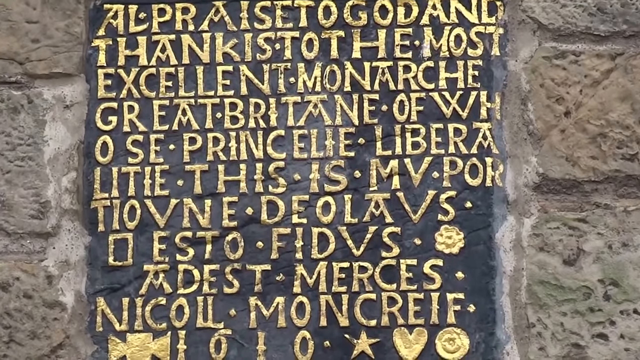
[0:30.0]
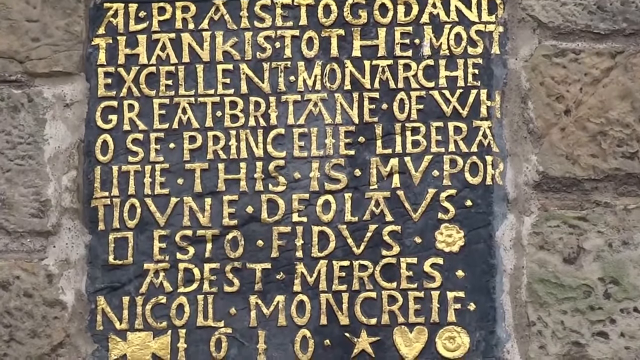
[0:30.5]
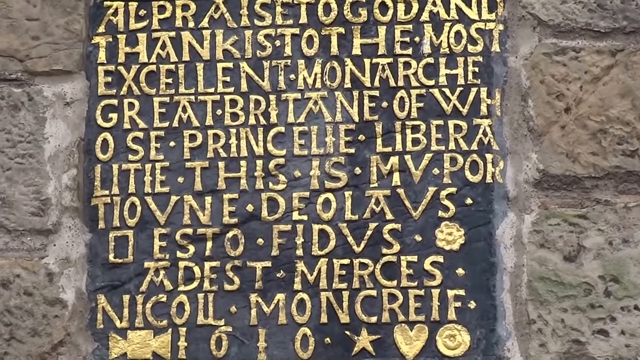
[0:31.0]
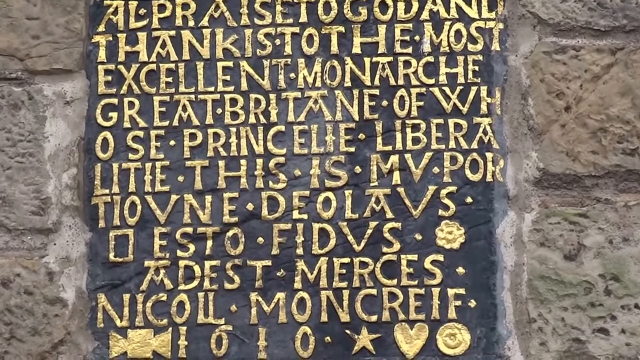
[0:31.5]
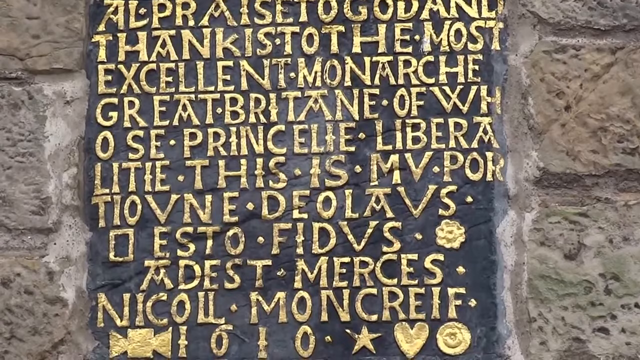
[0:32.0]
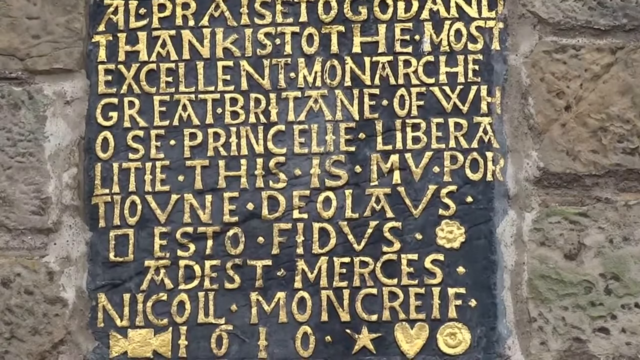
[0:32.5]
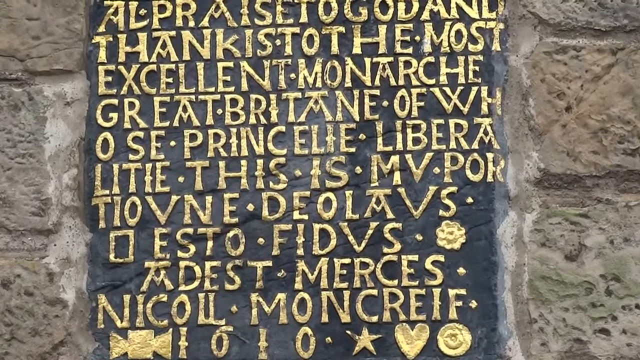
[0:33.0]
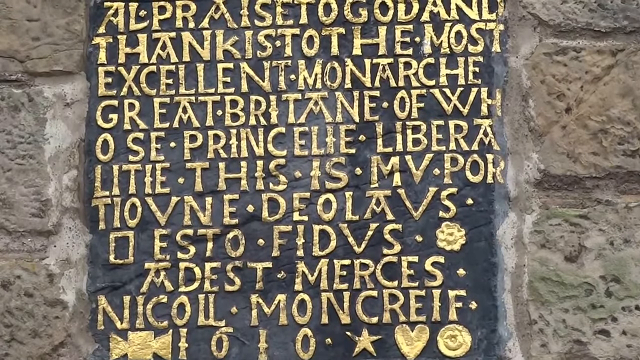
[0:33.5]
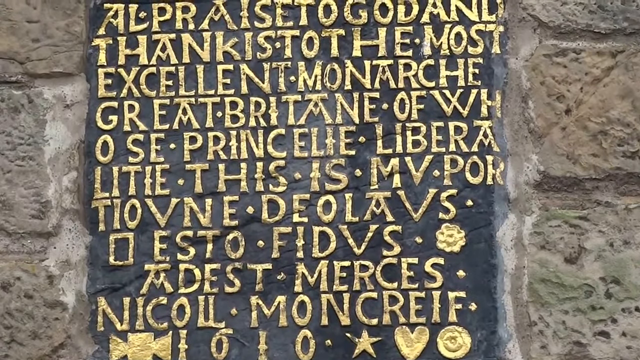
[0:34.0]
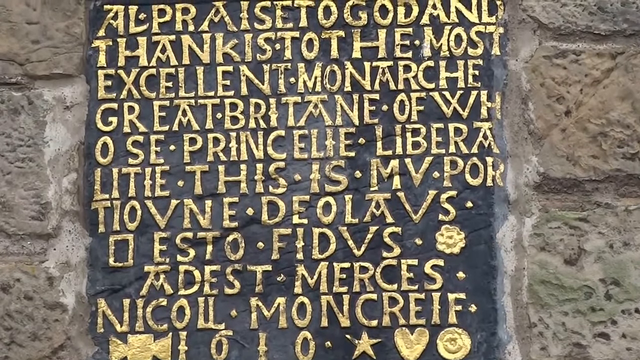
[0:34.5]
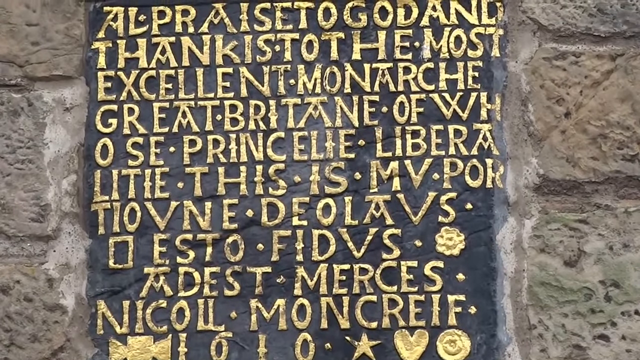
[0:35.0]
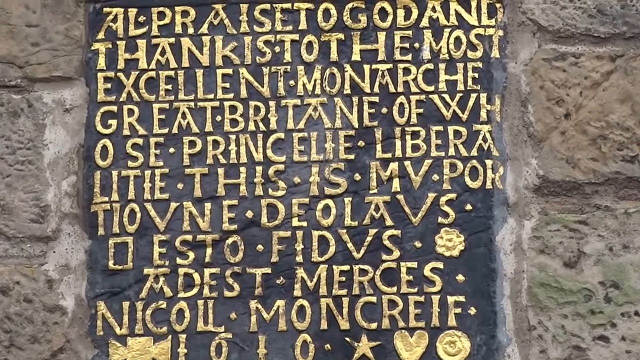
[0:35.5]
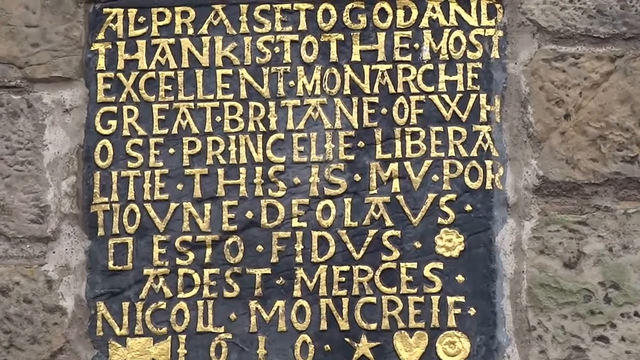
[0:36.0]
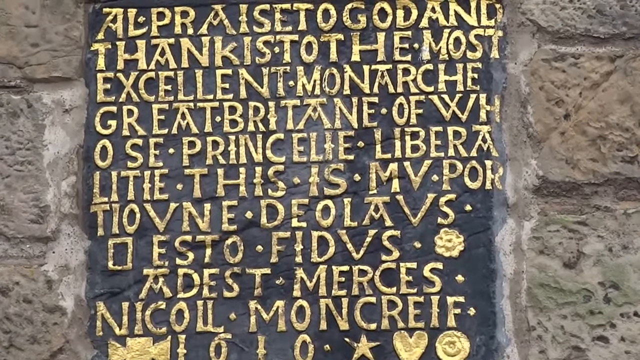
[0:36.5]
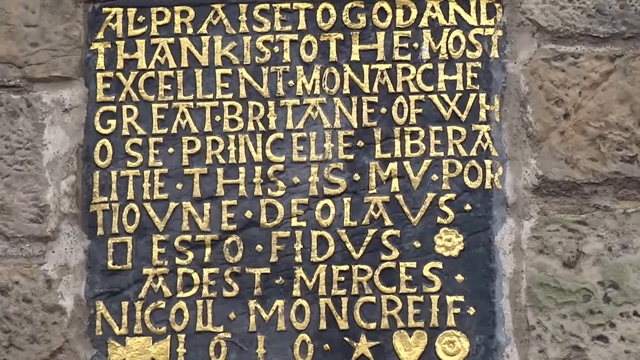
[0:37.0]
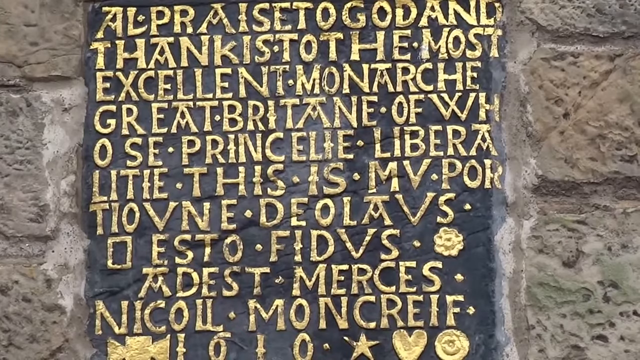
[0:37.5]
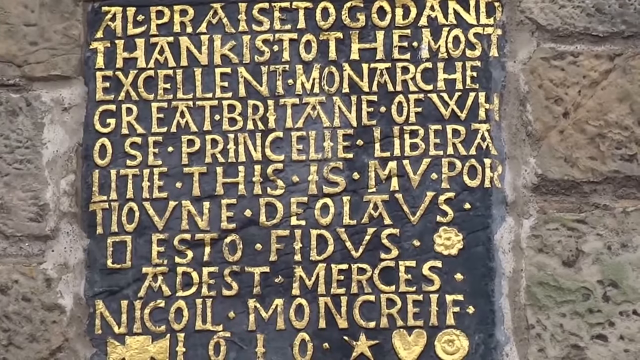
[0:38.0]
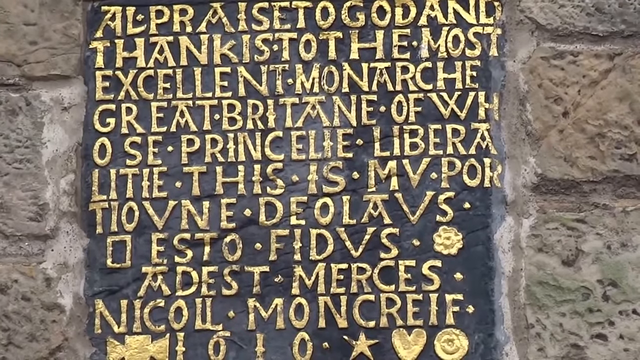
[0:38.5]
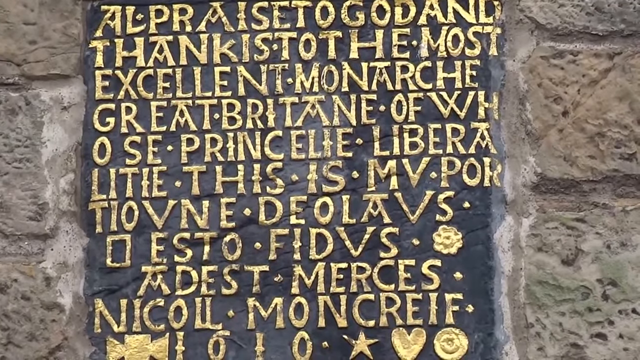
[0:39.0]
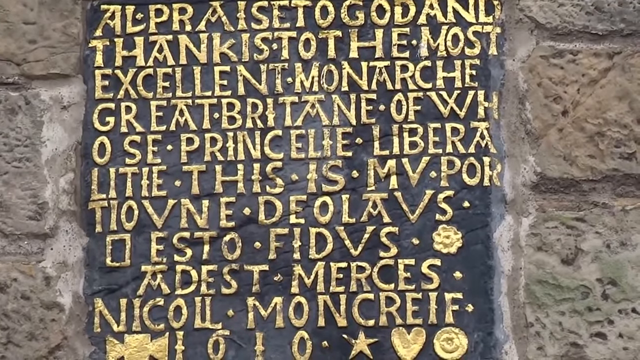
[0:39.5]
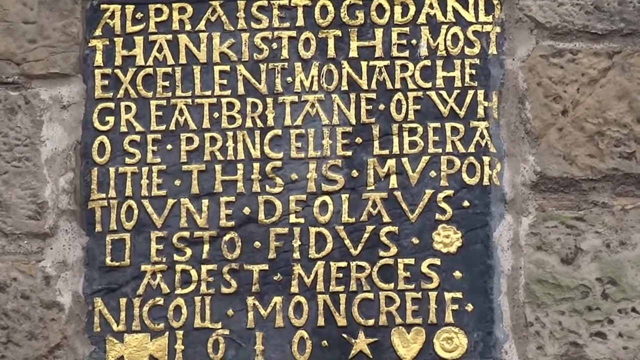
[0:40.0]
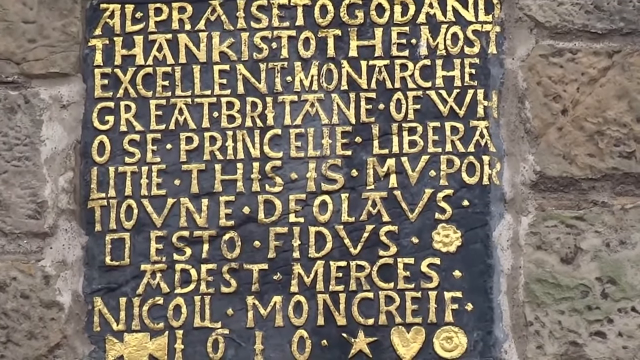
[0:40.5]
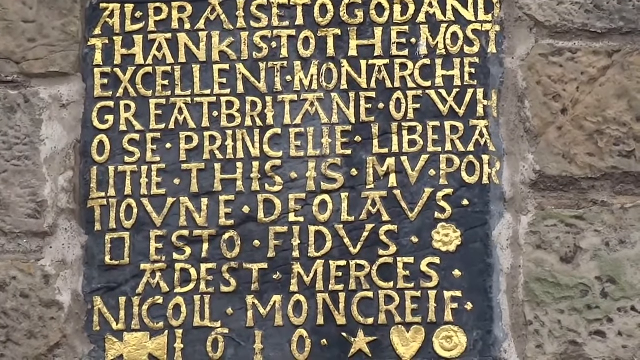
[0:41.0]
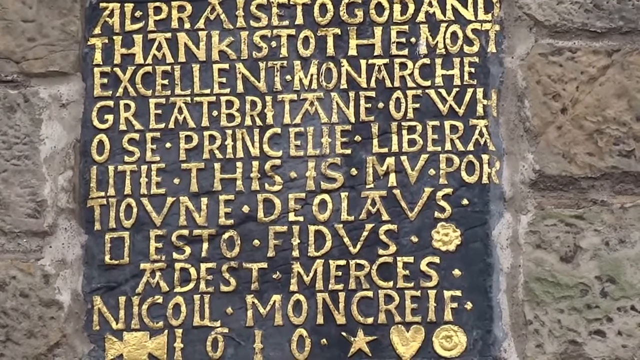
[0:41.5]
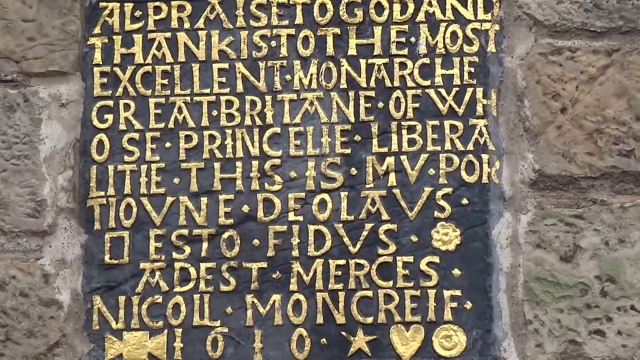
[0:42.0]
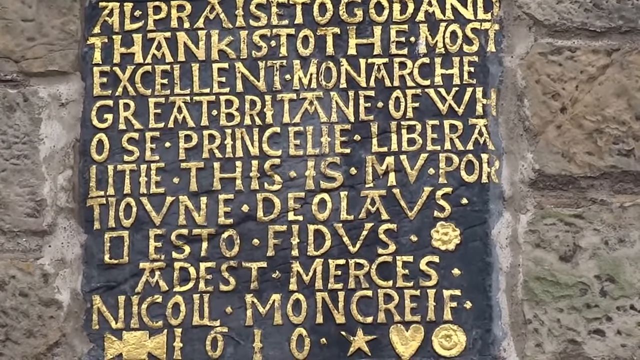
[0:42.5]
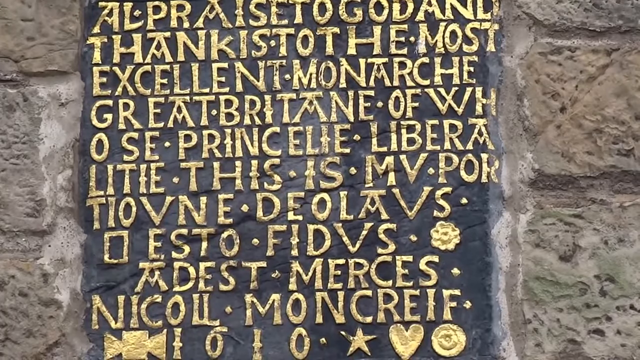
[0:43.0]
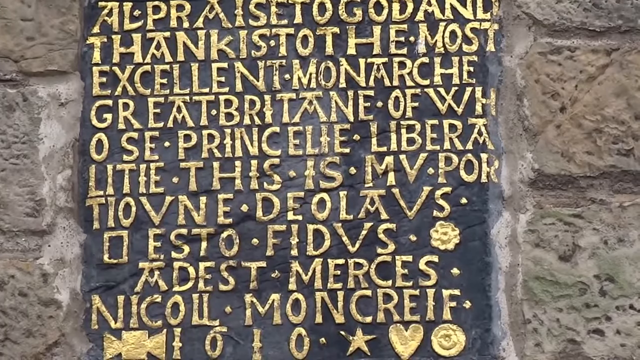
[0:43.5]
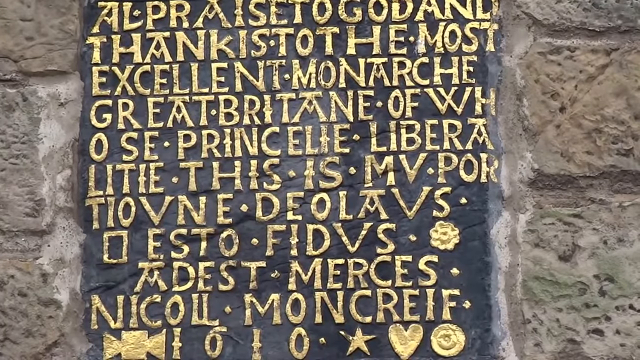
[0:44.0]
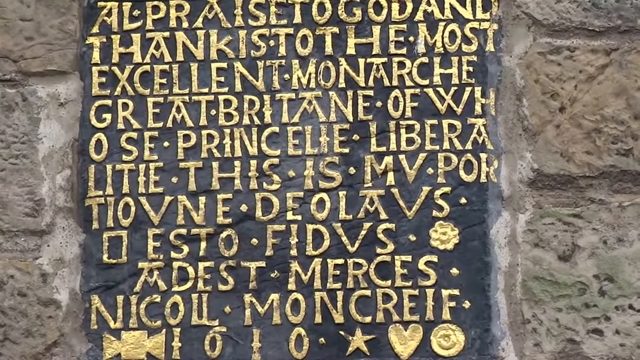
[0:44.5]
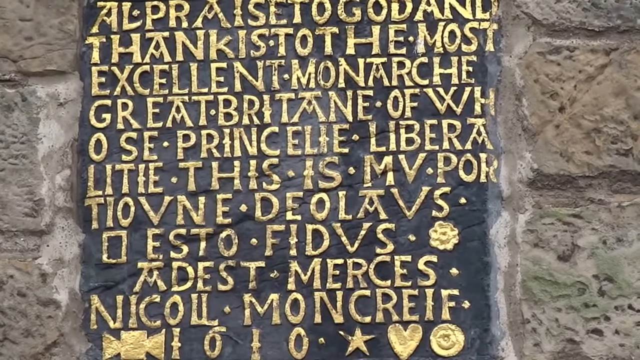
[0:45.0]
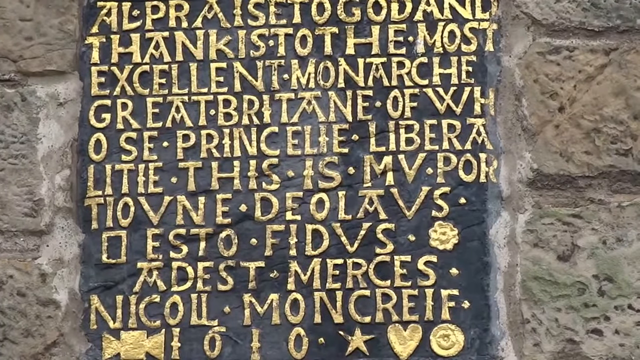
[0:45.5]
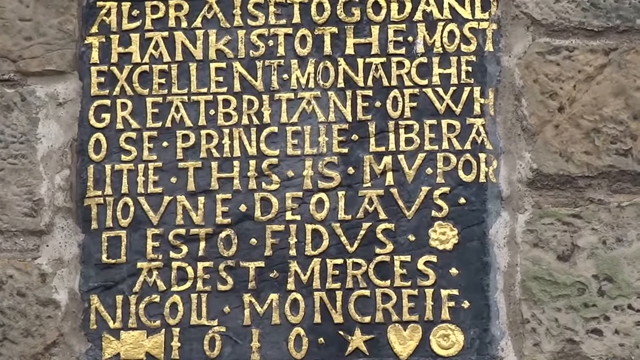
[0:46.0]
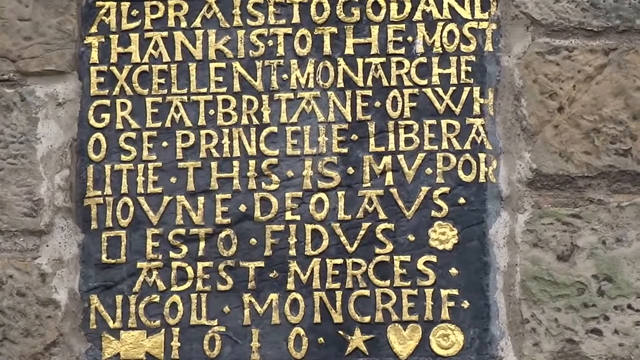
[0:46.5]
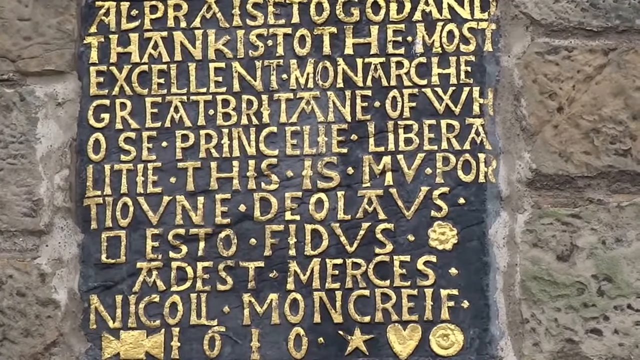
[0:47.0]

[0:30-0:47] An engraving on a wall begins "All praise to God and thanks to the most excellent monarch great Britain of whose princelie" and continues with further words, each separated by what looks like a full stop. The words at the beginning are in English, while the rest is in a different language that could be Latin or Italian. The text is in gold-colored capital letters on a black background, inside a square frame, and the wall looks like a mud brick wall in a greyish-brown shade. Nothing else is visible; the camera focuses on the wall and barely moves, apart from moving a bit upwards and downwards.